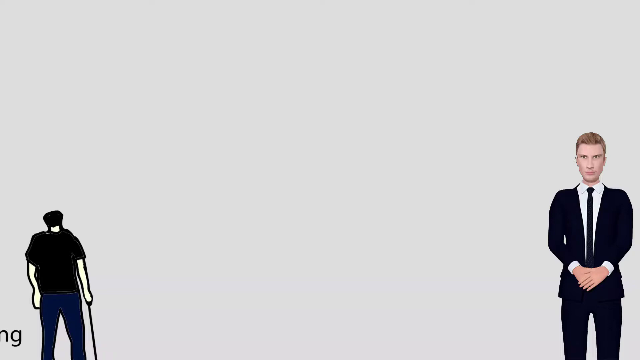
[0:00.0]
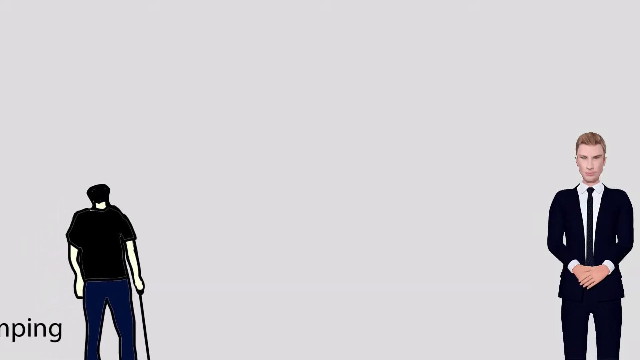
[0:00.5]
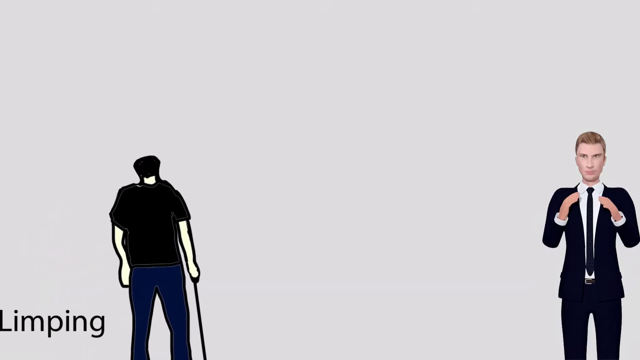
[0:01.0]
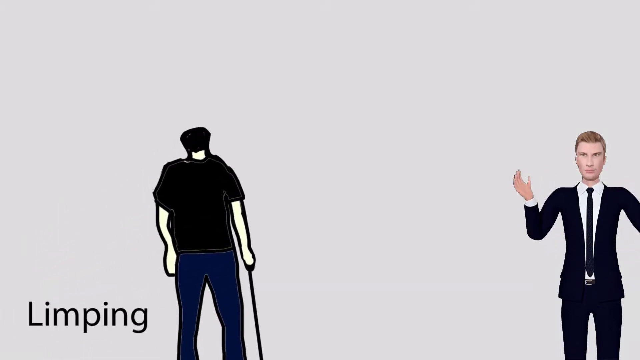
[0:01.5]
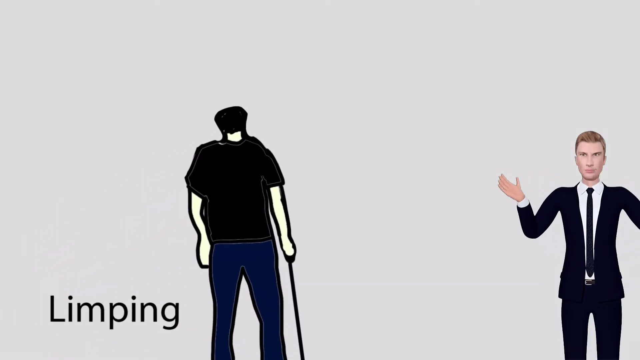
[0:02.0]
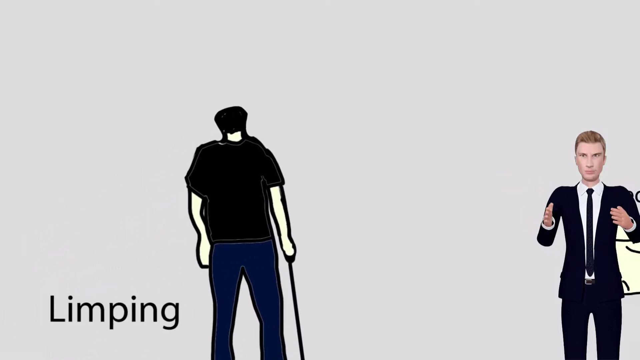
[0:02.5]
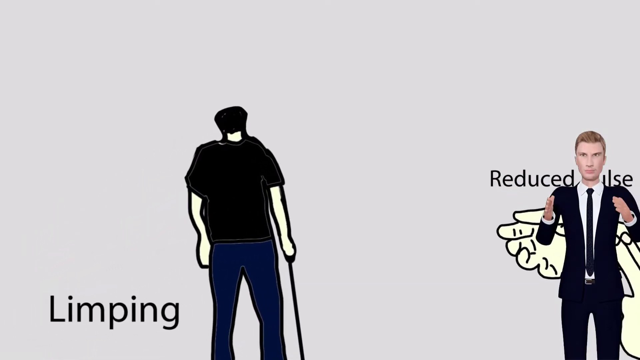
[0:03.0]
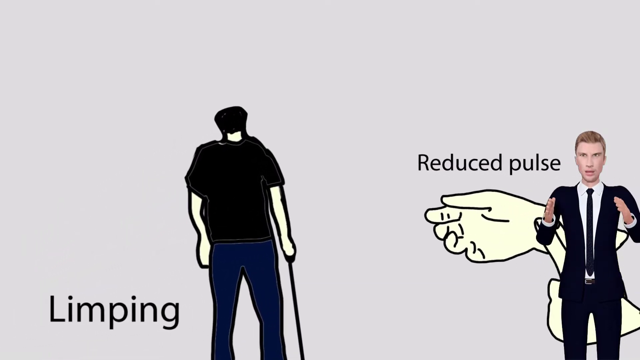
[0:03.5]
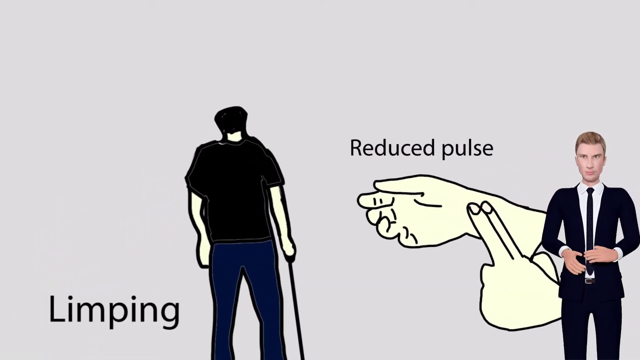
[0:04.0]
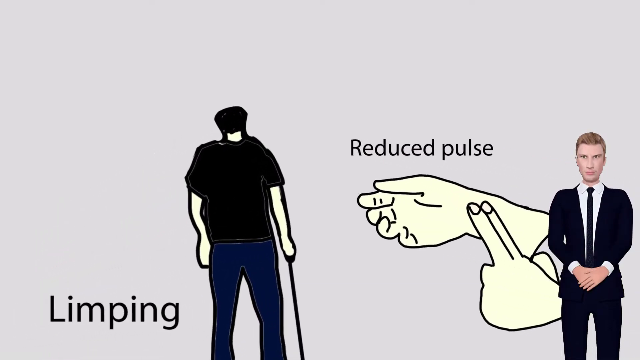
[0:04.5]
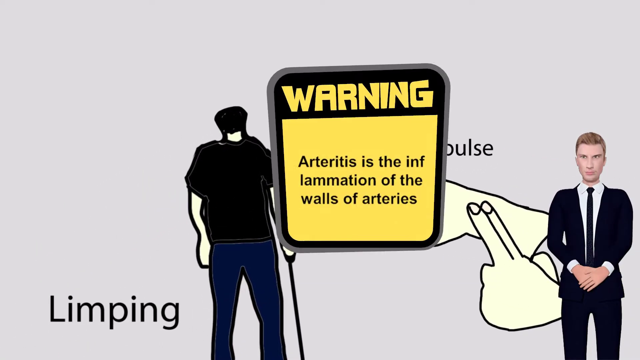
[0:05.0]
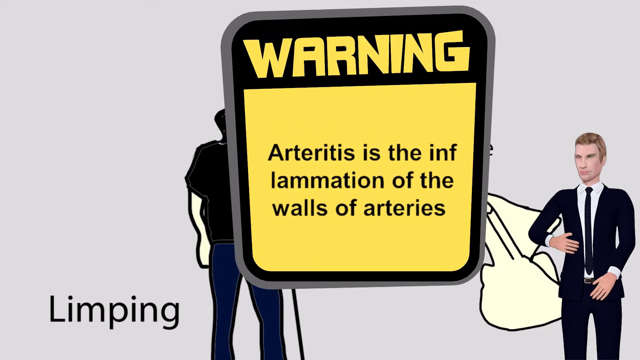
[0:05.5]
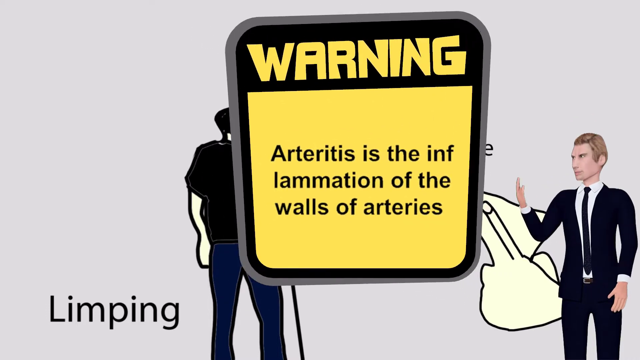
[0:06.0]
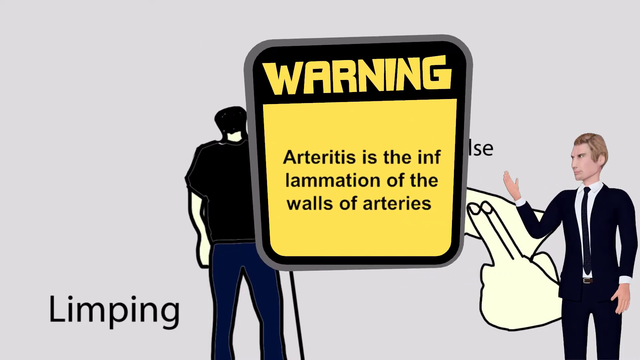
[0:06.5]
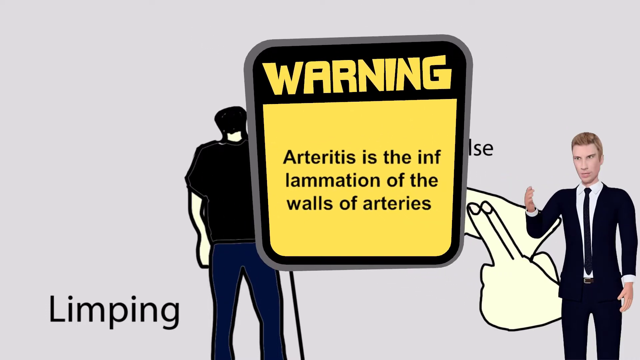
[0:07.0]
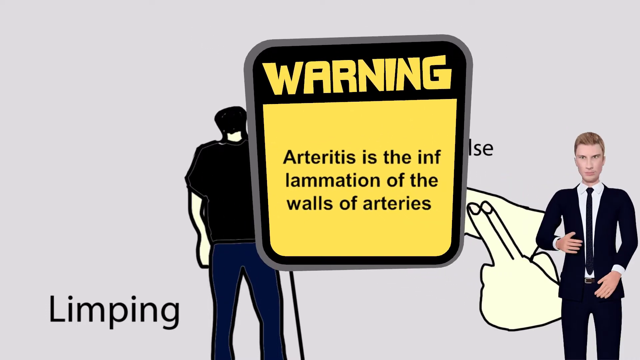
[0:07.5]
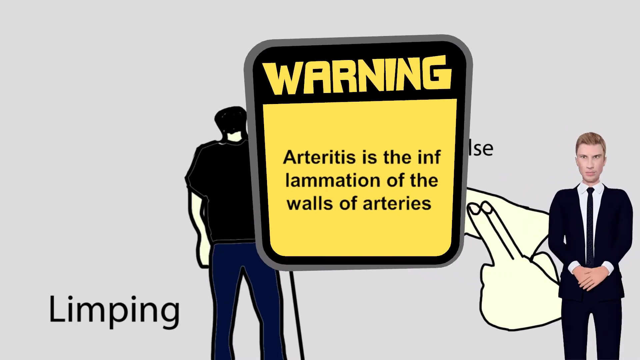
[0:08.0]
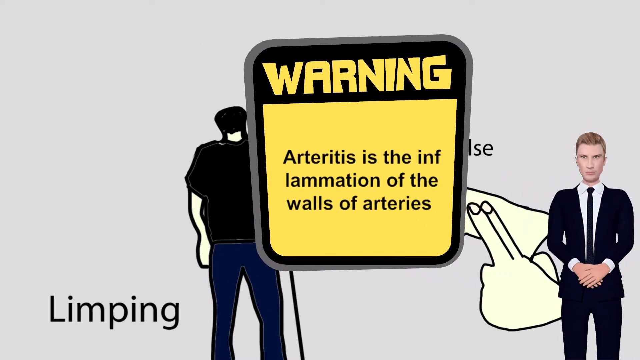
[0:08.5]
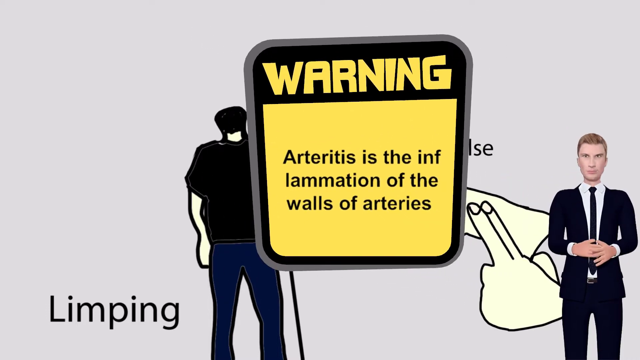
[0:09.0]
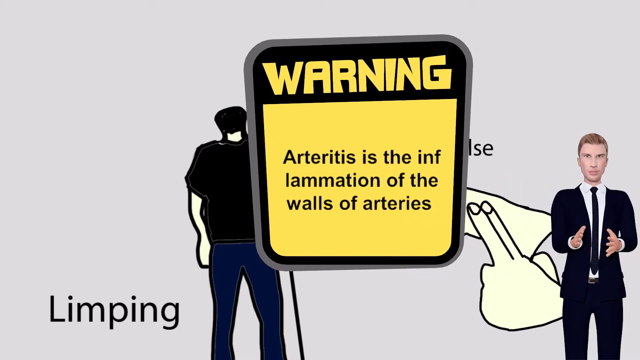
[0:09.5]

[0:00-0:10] A 3D animation shows on-screen text beginning "warning" that refers to inflammation of the arteries. A cartoon man is limping, and the word "limping" appears in the bottom left section of the screen. The text "reduce pulse" appears over the cartoon, and a person puts two fingers over the pulse on their arm to show the reduced pulse.